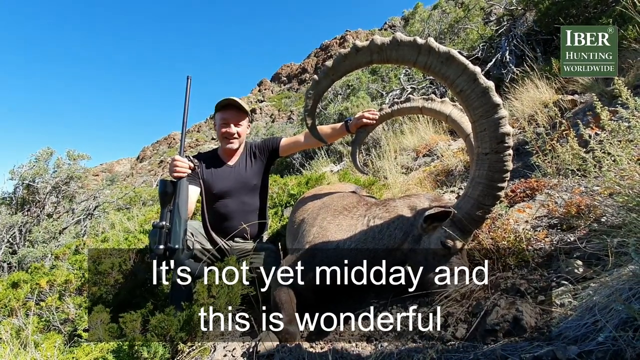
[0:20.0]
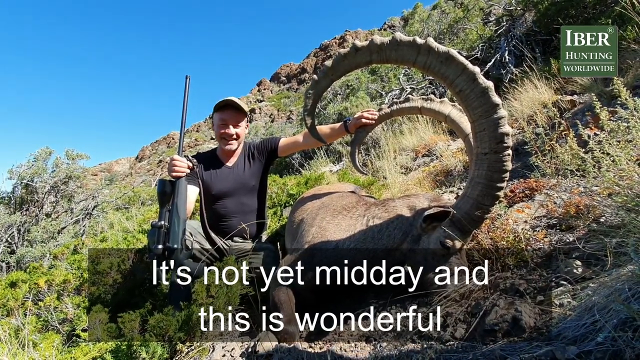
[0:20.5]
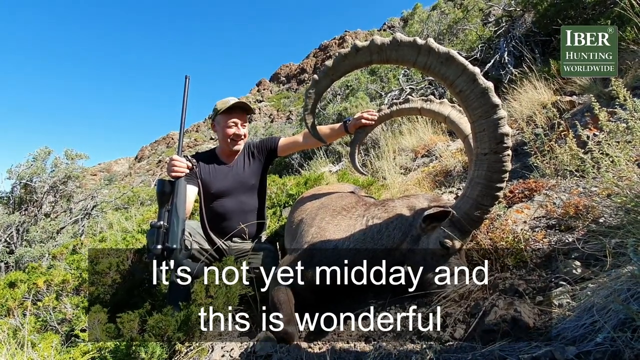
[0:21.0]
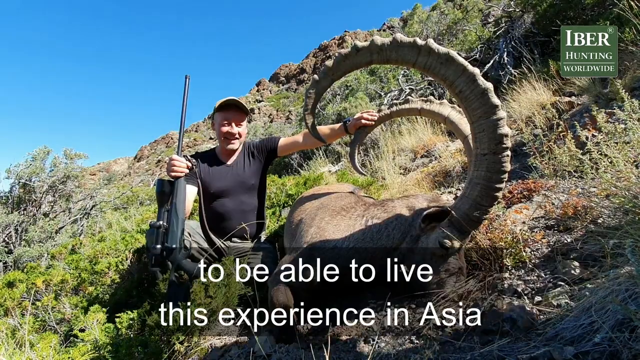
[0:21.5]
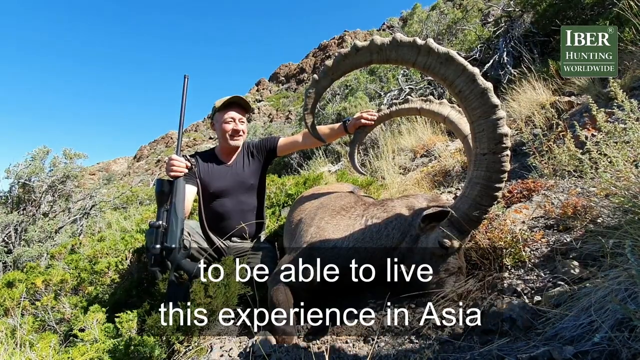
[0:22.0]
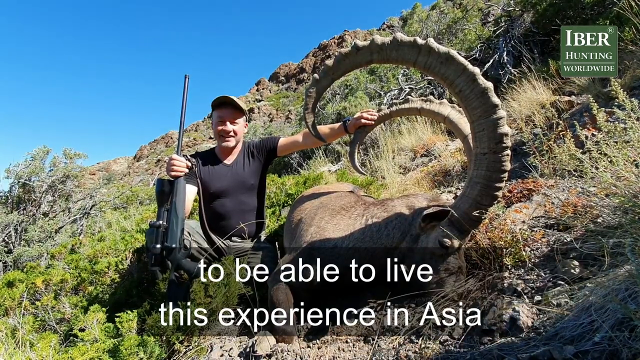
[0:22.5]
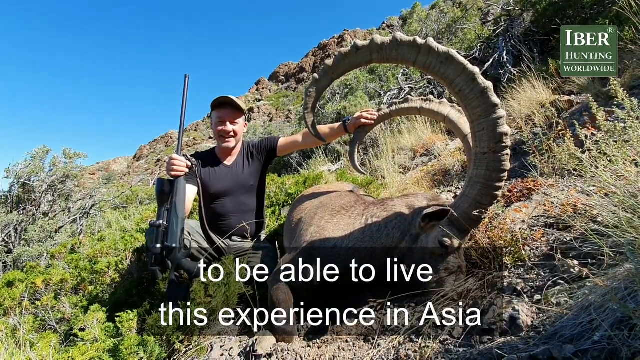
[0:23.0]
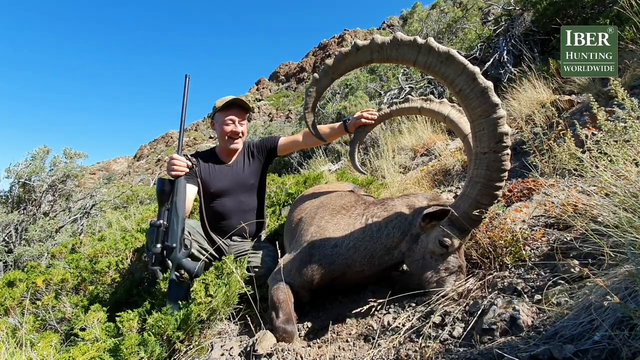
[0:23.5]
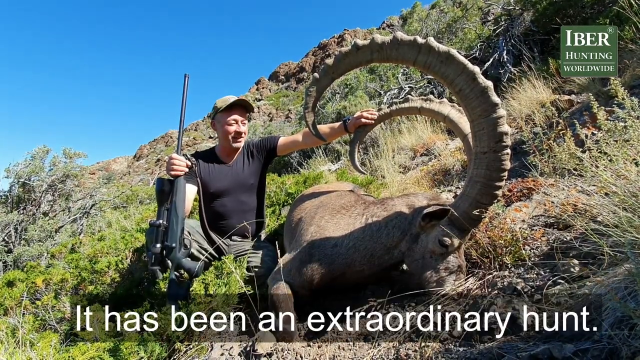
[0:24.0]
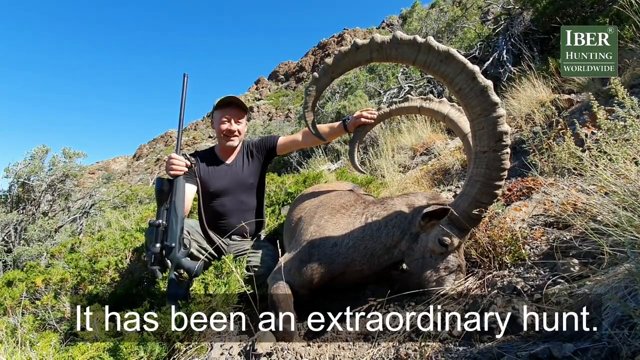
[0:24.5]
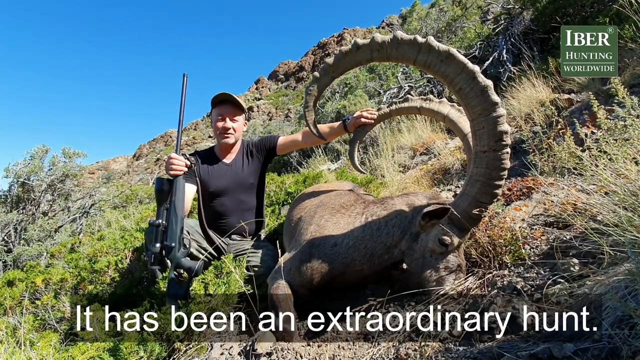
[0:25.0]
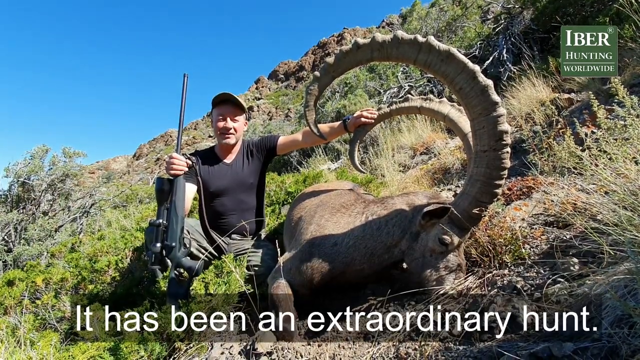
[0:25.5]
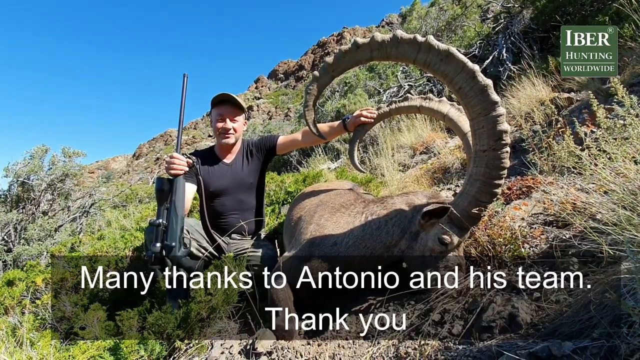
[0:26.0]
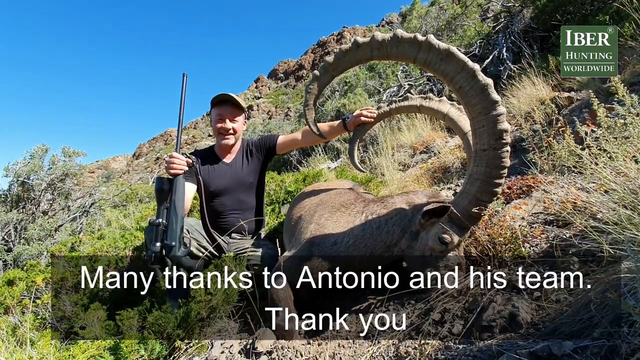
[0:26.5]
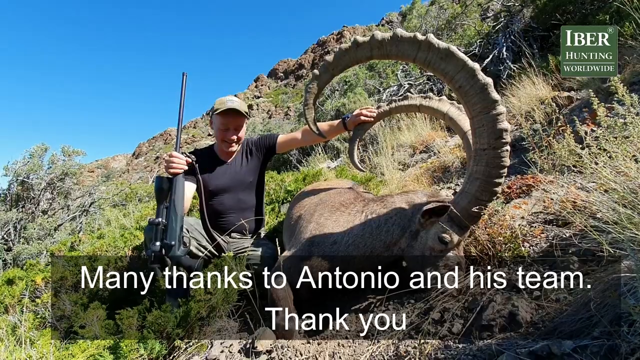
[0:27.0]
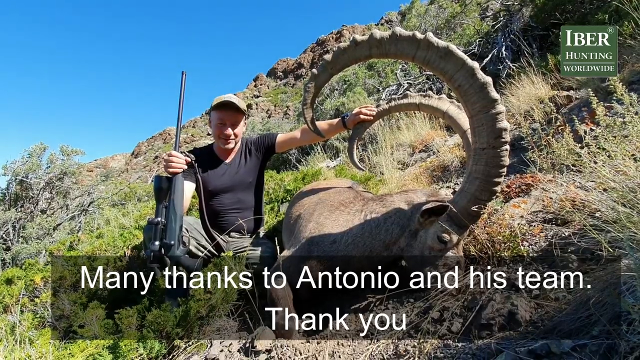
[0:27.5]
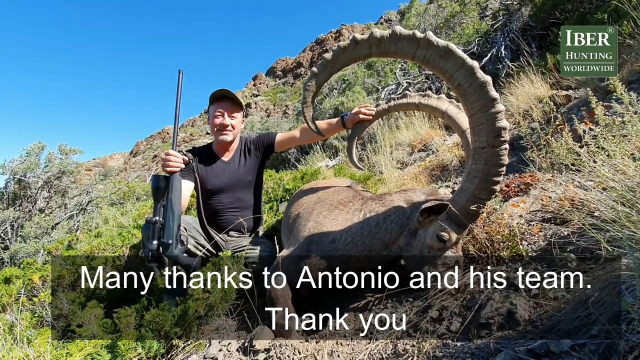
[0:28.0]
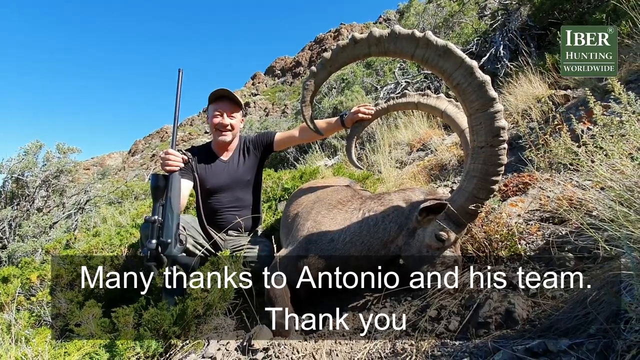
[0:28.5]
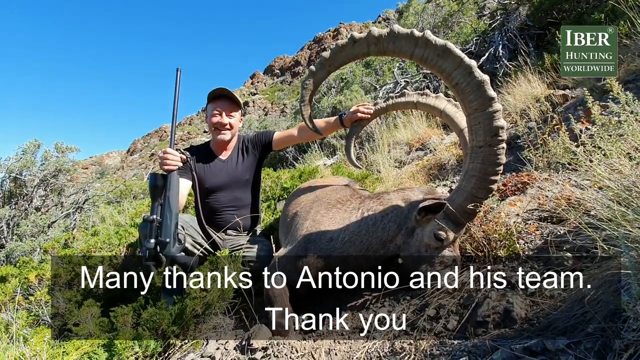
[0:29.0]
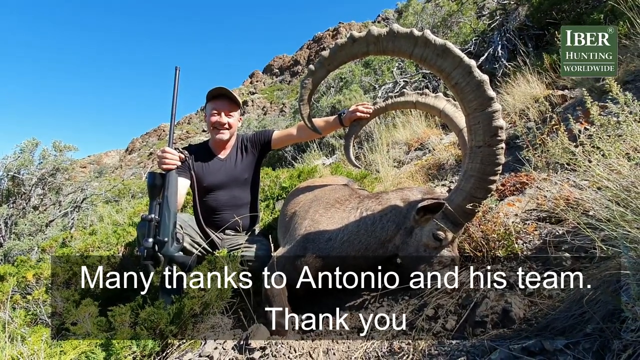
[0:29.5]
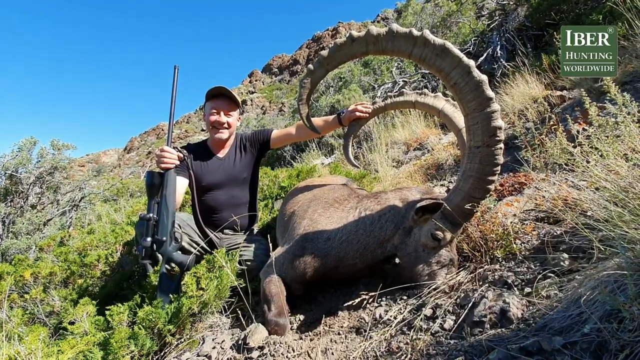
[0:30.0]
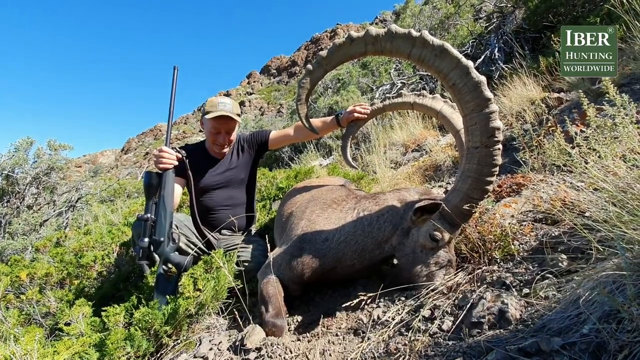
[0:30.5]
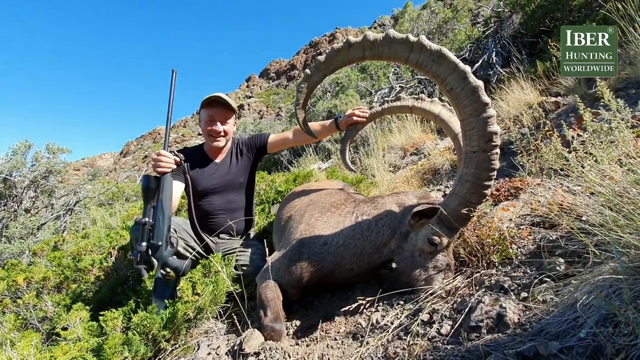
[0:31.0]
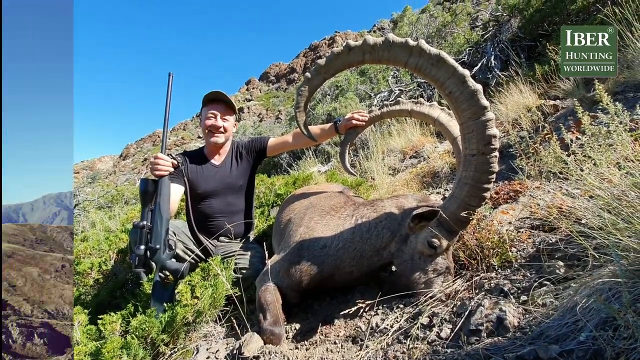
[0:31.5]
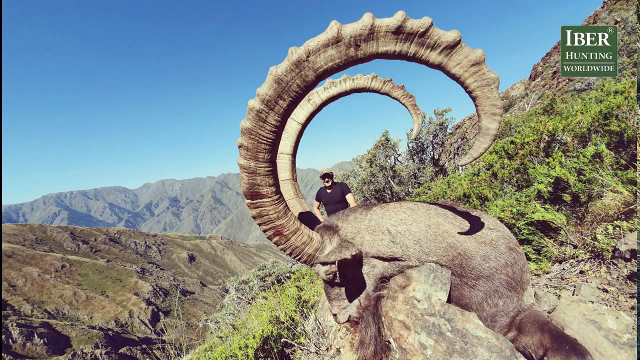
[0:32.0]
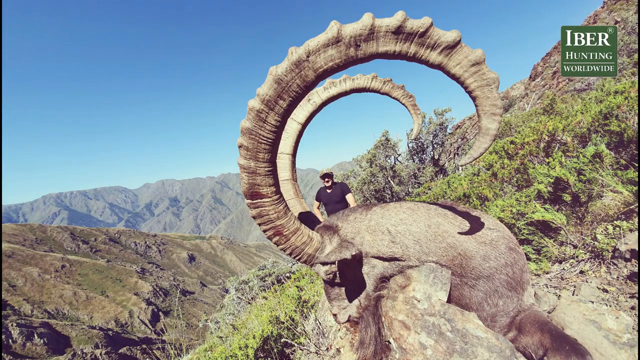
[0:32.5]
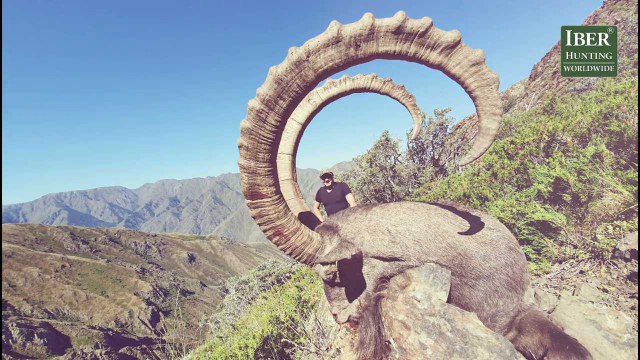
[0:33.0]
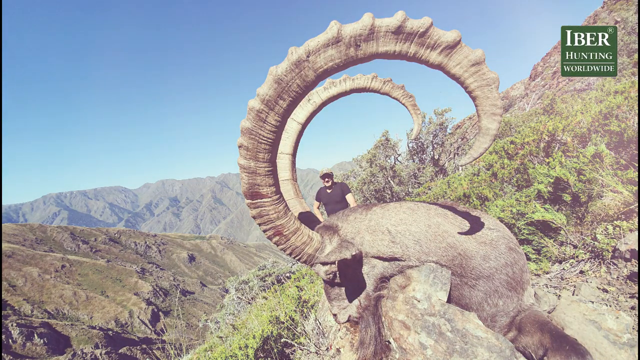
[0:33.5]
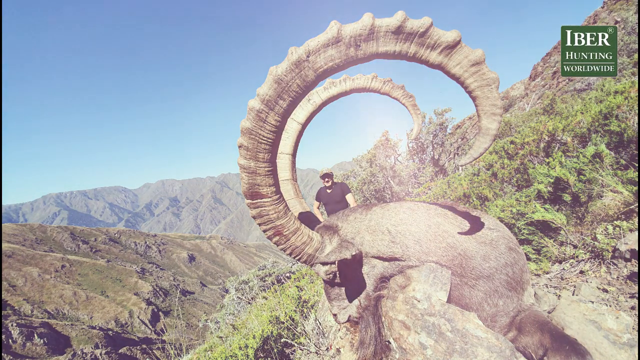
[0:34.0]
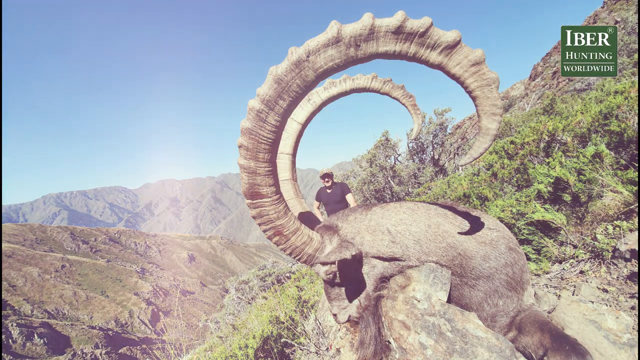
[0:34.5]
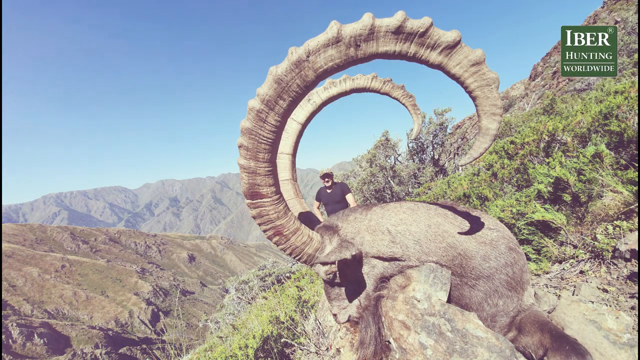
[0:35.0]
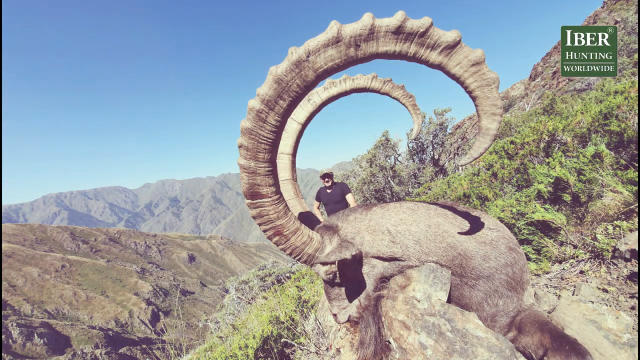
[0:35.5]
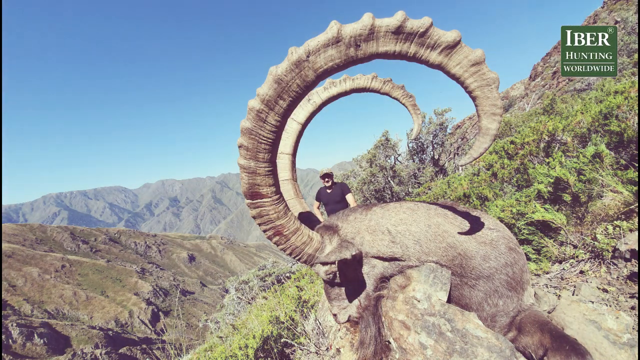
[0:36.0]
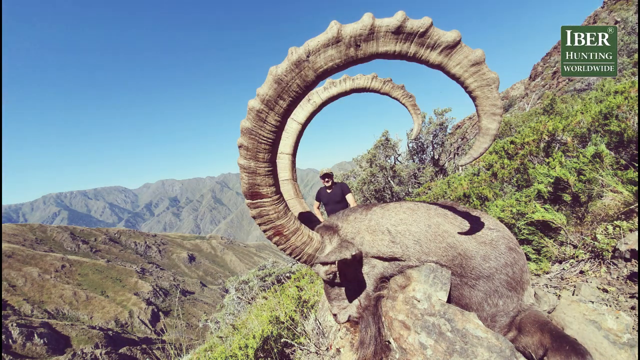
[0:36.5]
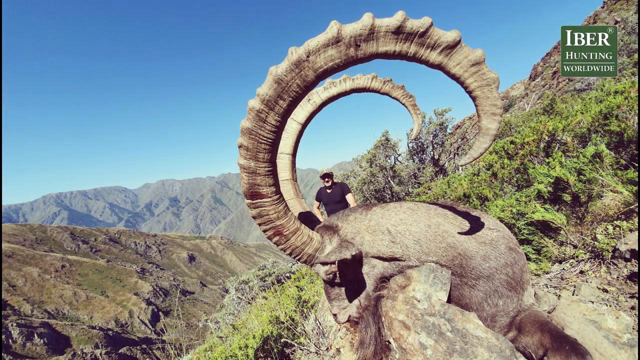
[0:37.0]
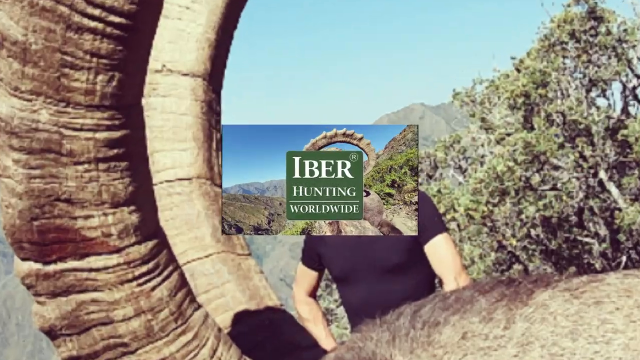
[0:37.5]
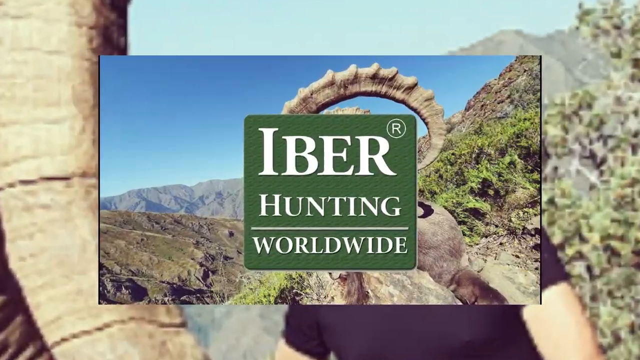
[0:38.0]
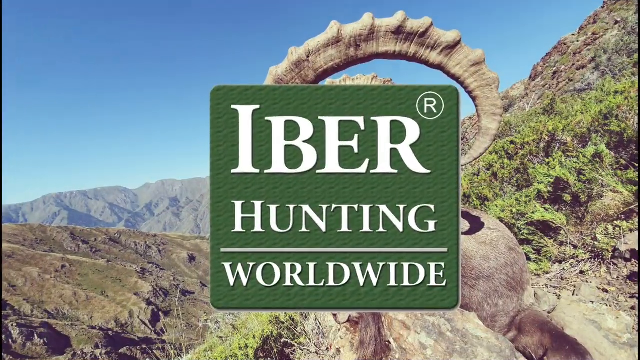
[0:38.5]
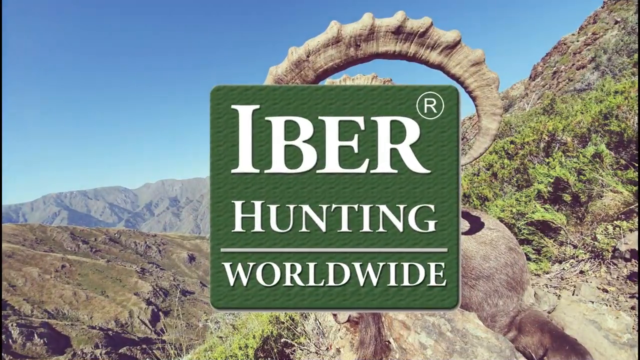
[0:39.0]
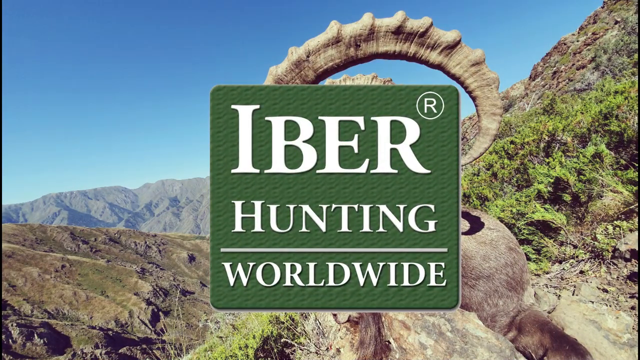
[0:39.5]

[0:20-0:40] A man wearing a black shirt and a baseball cap holds a huge rifle in his right hand, and in his left hand he holds the antler of what looks like a dead deer. In the upper right corner is "IBER hunting worldwide". The subtitle reads "it's not yet midday and this is wonderful" and continues as he talks to the camera: "To be able to live this experience in Asia, it has been an extraordinary hunt. Many thanks to Antonio and his team. Thank you." The next scene shows the dead animal over a huge rock overlooking a mountain, its huge antlers visible as the hunter looks through them. A glow goes over the screen, and the IBER Hunting Worldwide logo in green zooms in over the deer, with the antlers still in view.